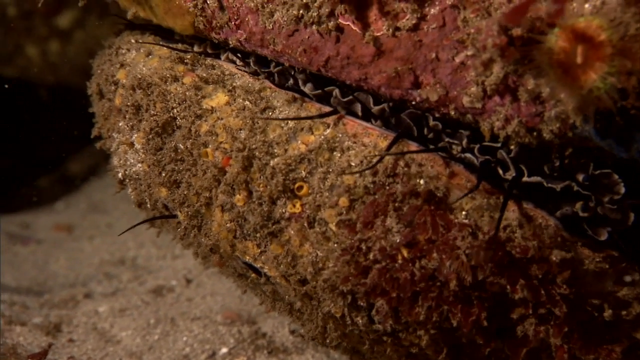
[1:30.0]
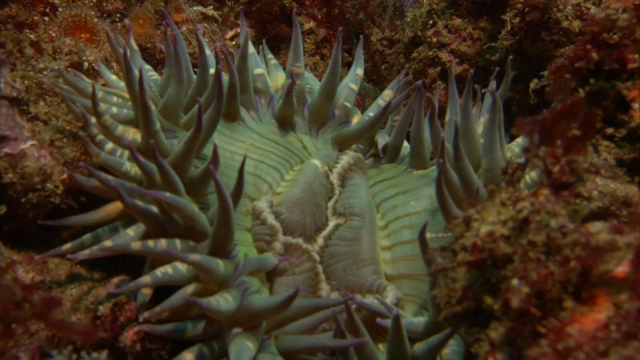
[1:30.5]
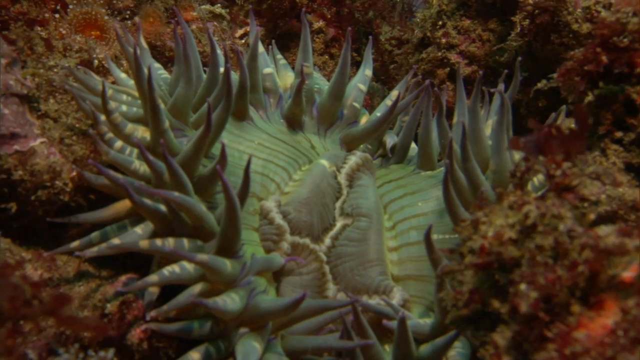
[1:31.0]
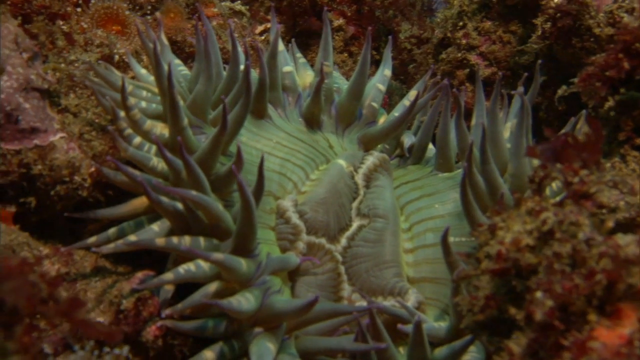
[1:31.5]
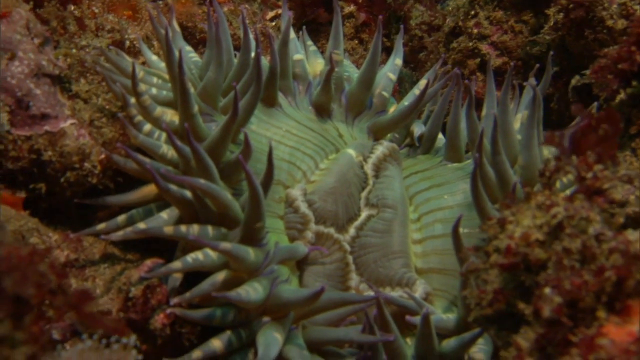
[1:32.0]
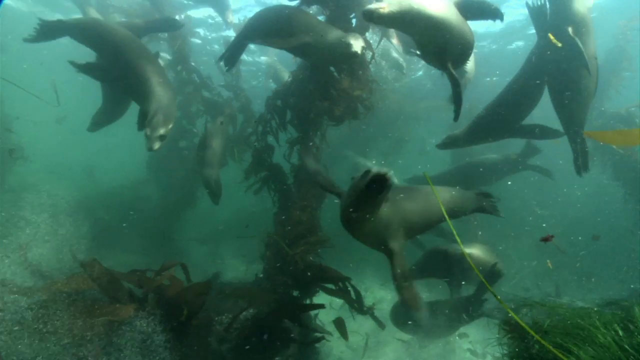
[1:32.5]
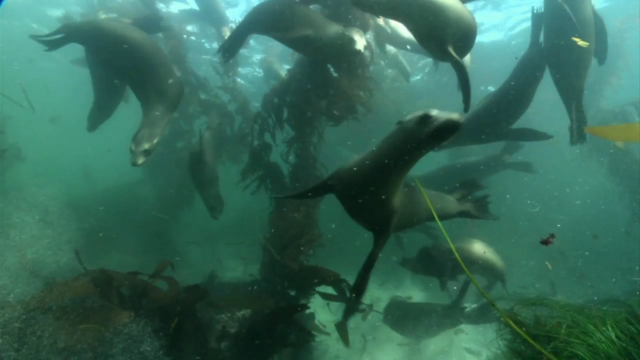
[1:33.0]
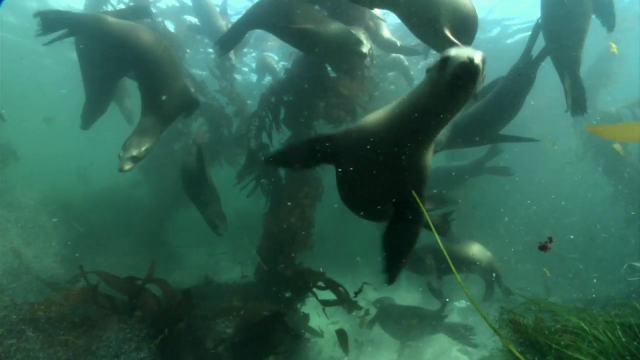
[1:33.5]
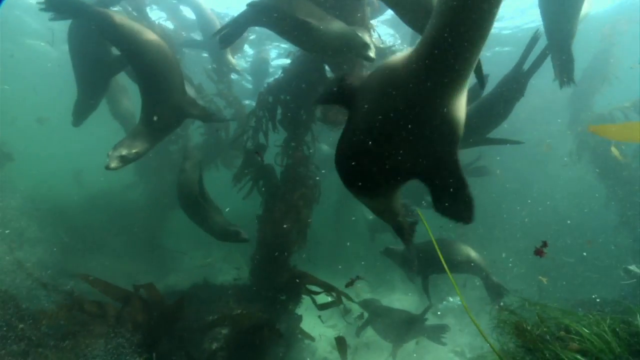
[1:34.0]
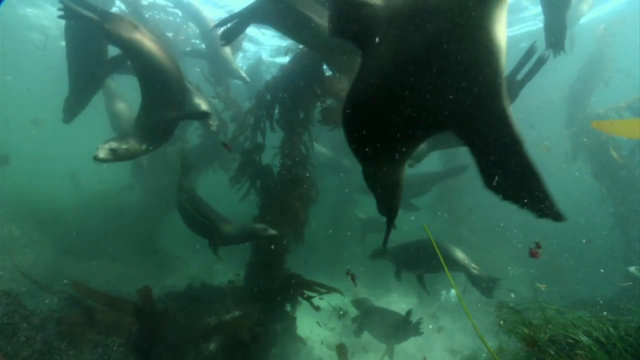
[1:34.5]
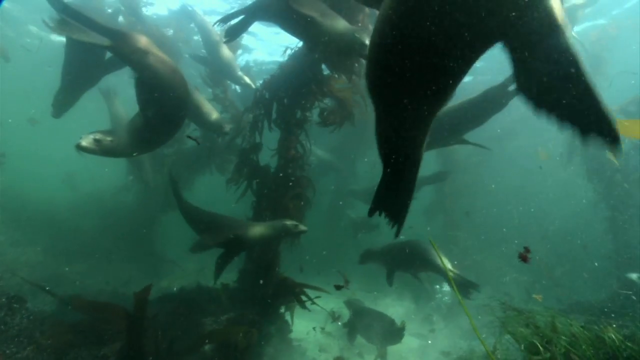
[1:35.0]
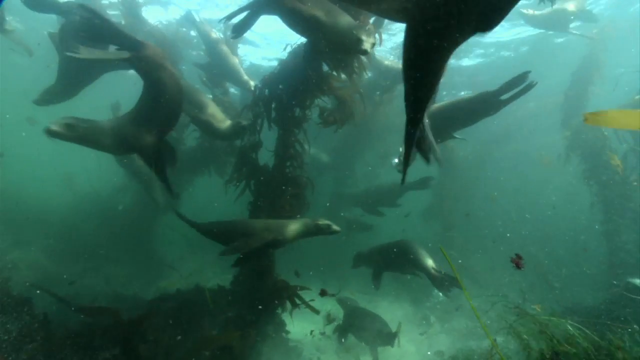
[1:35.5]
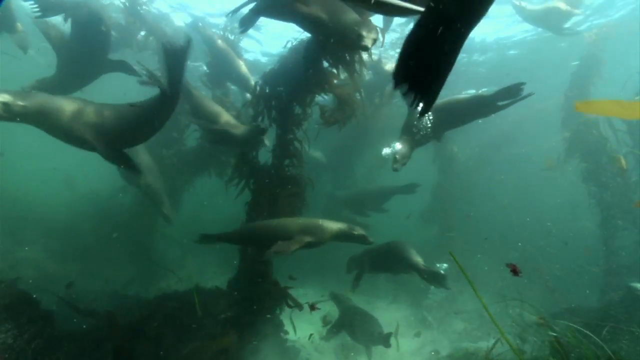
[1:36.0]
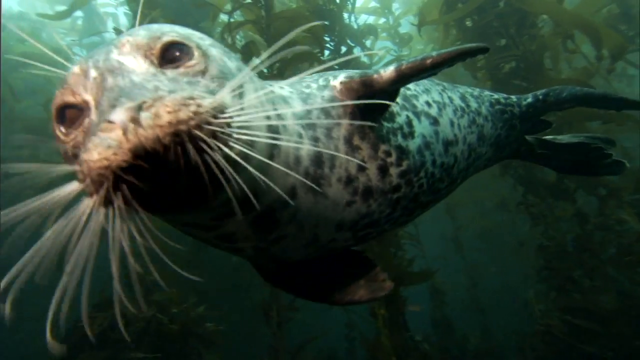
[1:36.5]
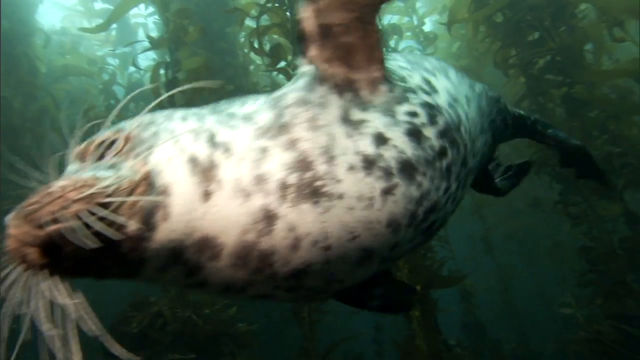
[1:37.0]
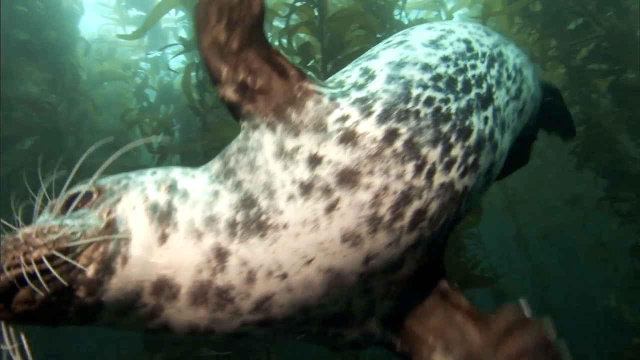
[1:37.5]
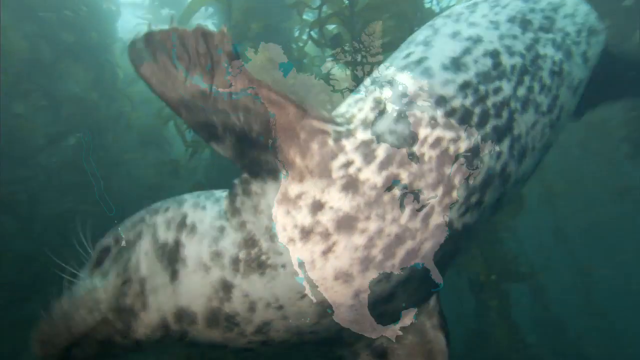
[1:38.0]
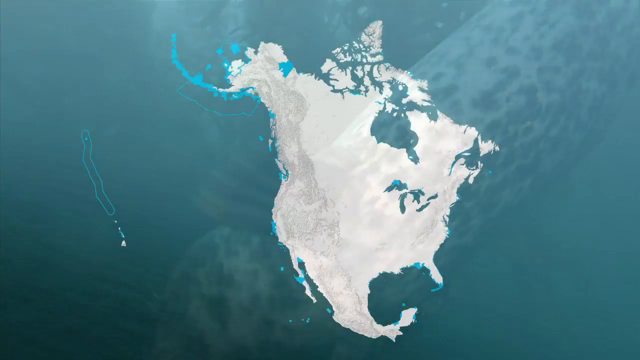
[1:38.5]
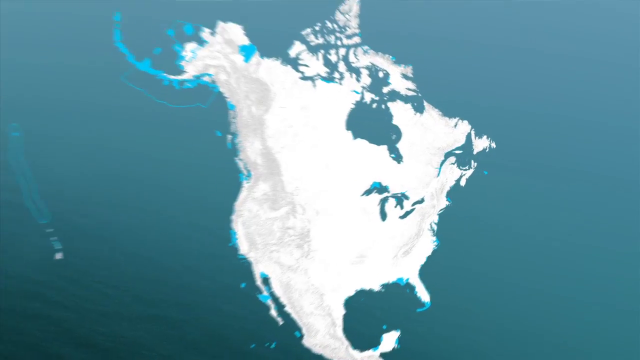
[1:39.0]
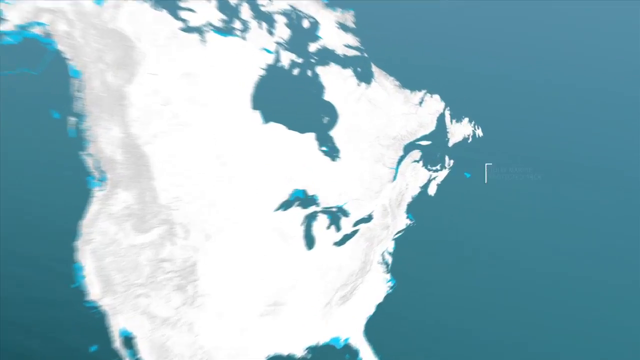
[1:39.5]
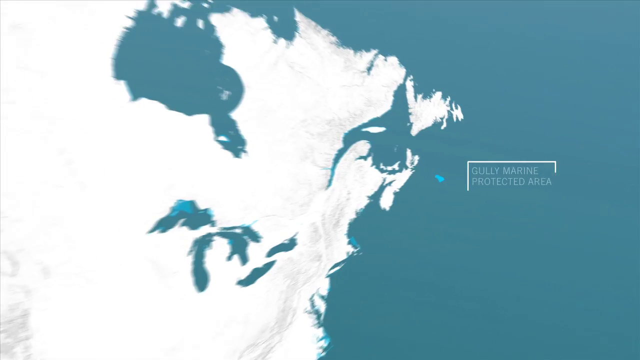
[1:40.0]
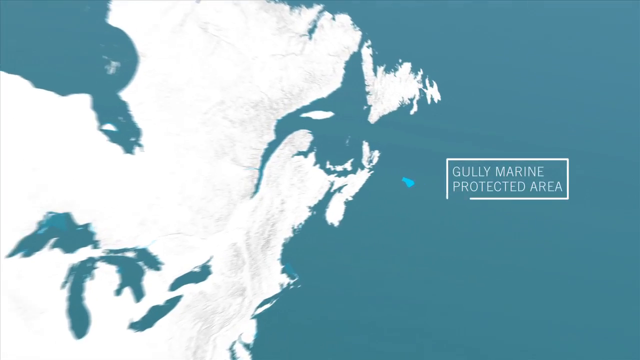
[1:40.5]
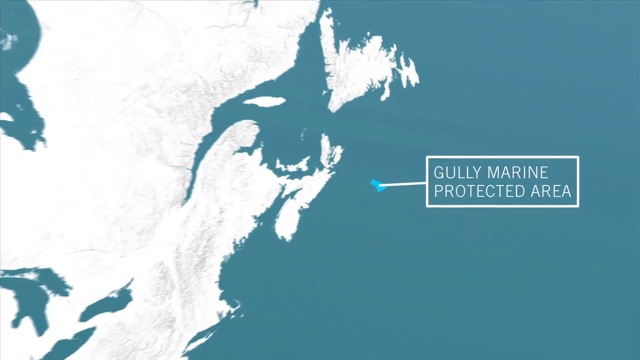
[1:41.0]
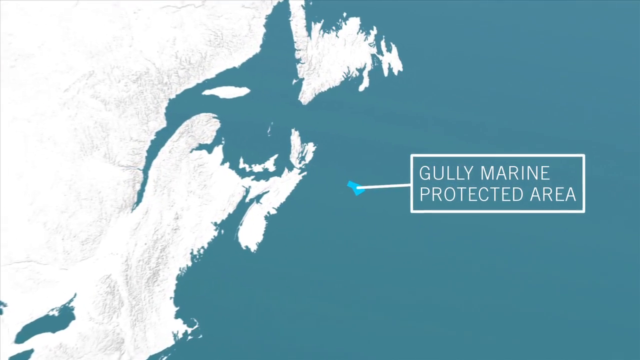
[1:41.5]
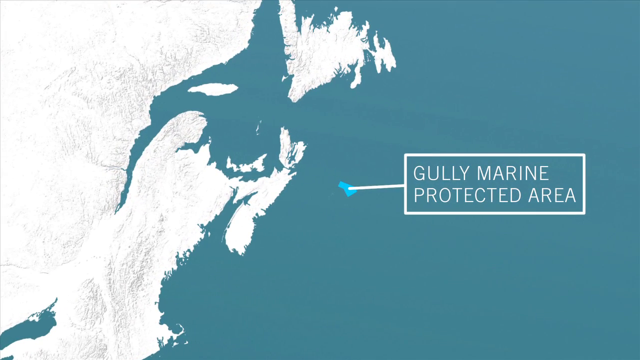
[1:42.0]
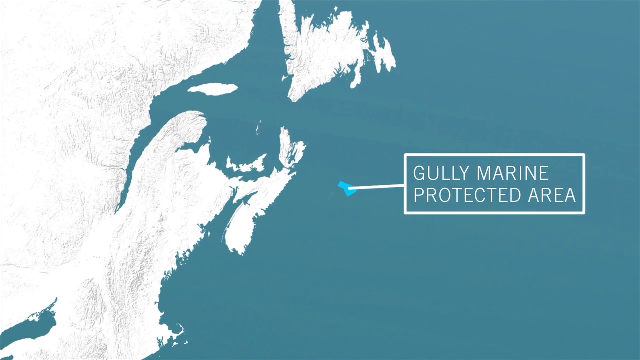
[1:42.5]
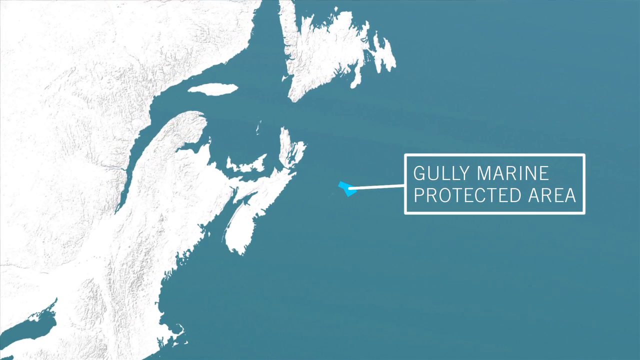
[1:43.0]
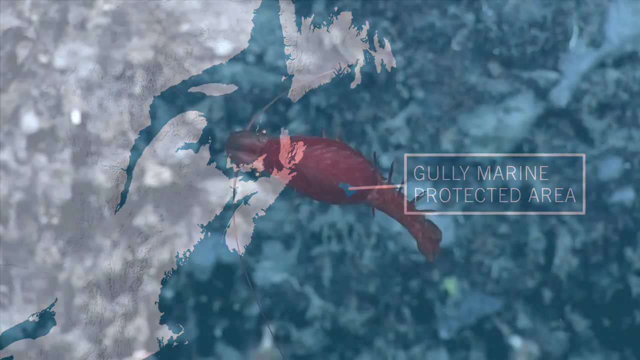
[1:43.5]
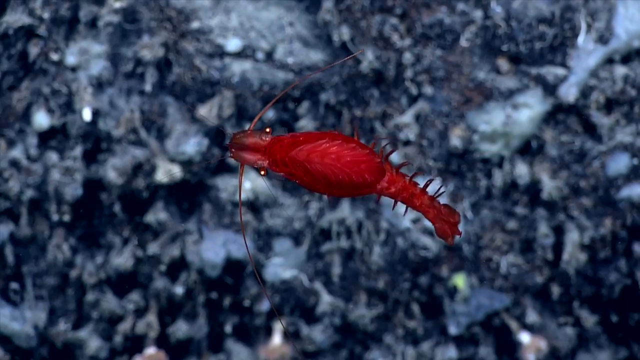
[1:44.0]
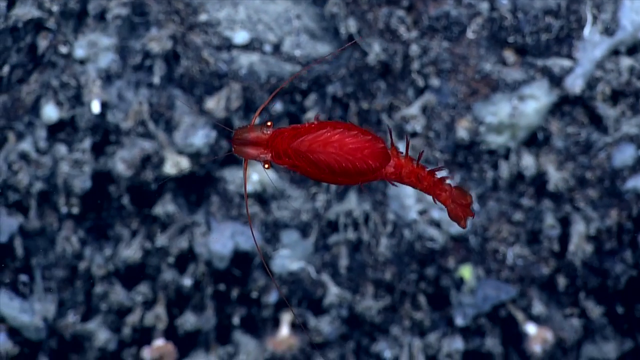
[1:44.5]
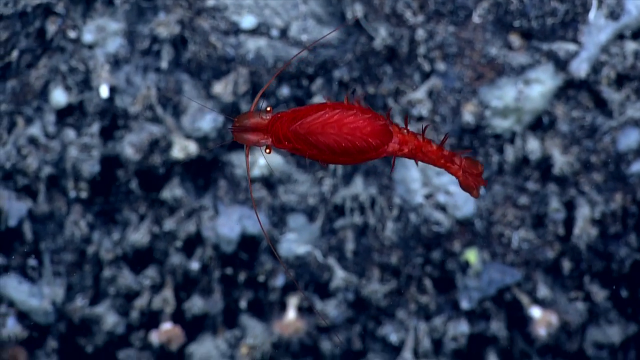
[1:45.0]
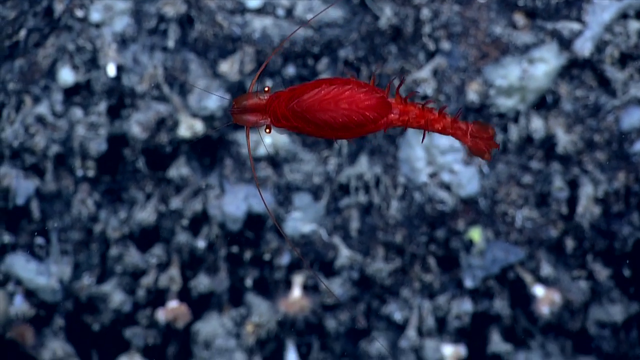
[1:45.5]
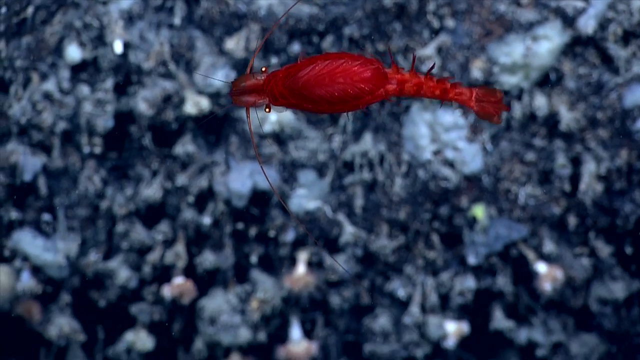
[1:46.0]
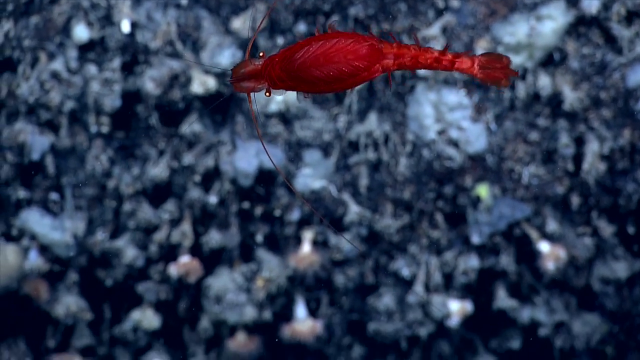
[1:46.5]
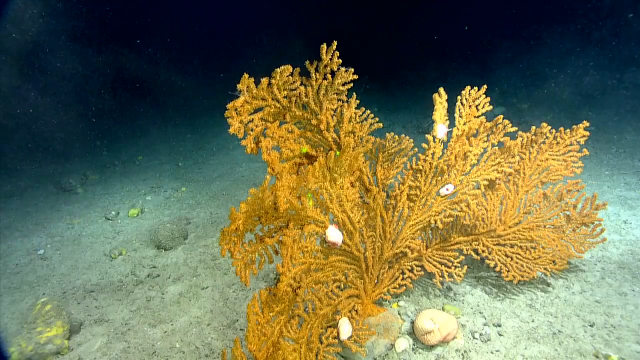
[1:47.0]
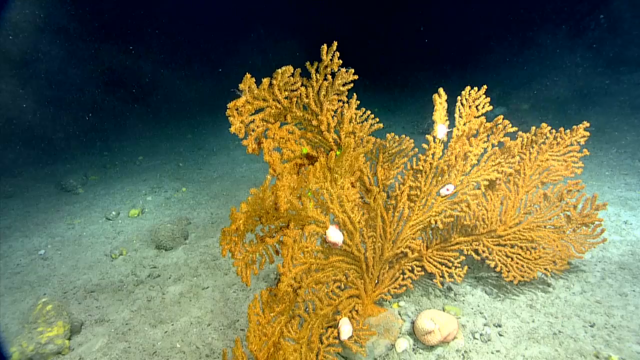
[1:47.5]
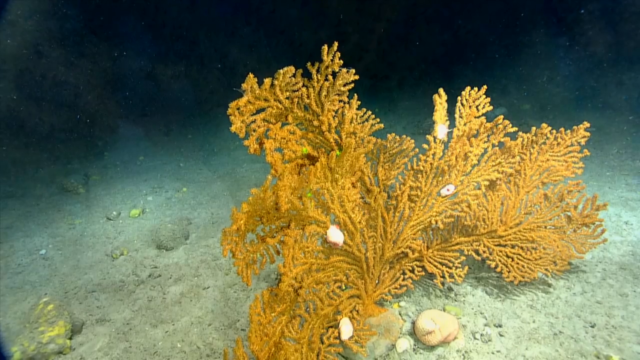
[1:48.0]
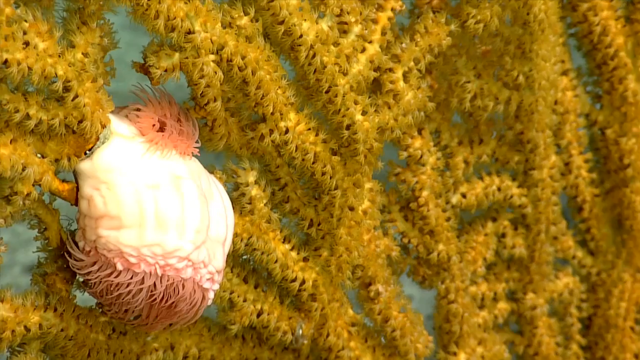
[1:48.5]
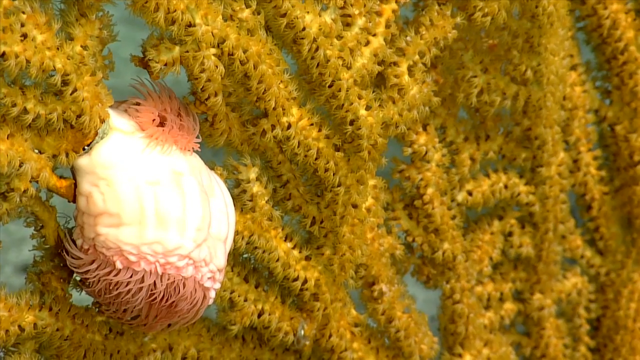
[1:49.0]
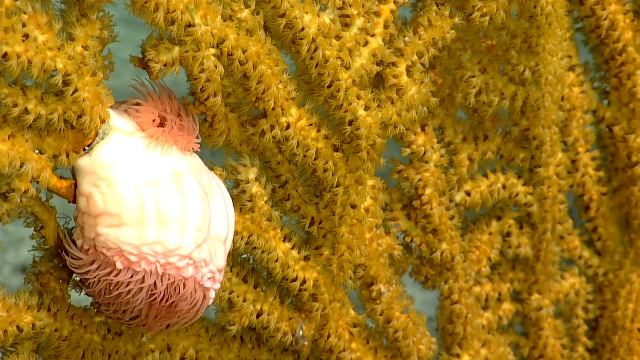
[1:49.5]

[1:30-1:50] Footage of Channel Islands National Park continues with the weird-looking sea creature, which looks like a fuzzy rock or a rock with a bunch of mold. In between it is a black sheet-like thing, with little tentacles sticking out of a groove. Another weird-looking creature has little tentacle-looking things coming out of it and looks almost like a cactus; it is possibly blue or green. Quite a number of seals swim around, one getting very close to the camera; this seal has black and white spots like a cheetah. Another marine protected area follows, Gully Marine Protected Area, beginning with a little red shrimp. A bright coral of some sort appears, then a zoomed-in picture of the coral with an animal attached to it that looks squishy and has little tentacles or little arms coming out of it.